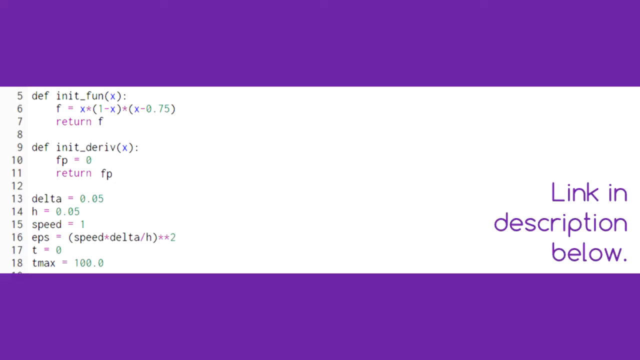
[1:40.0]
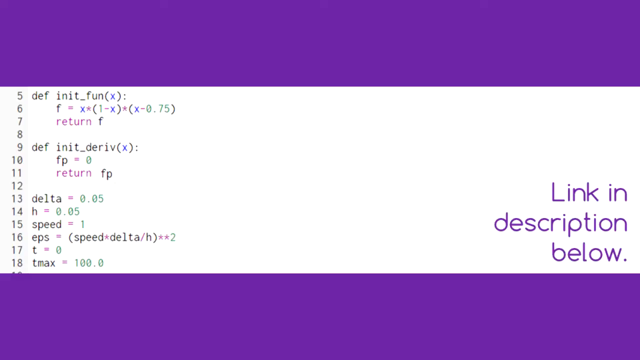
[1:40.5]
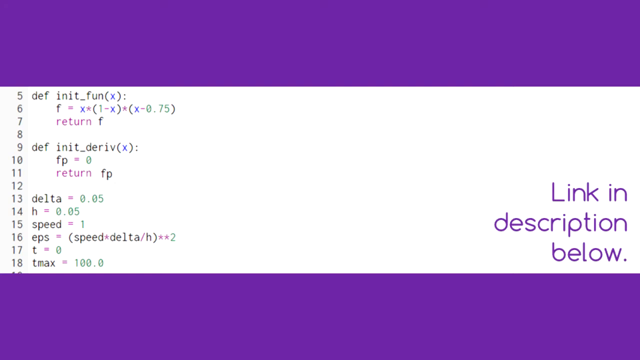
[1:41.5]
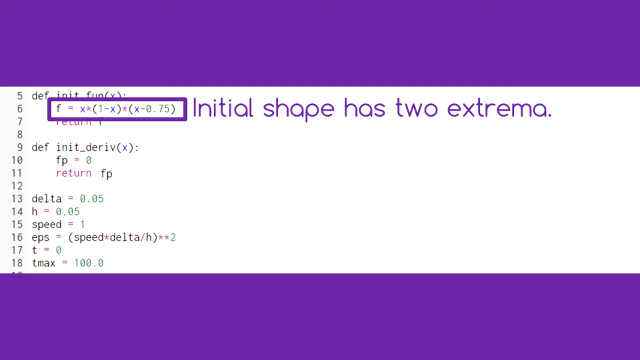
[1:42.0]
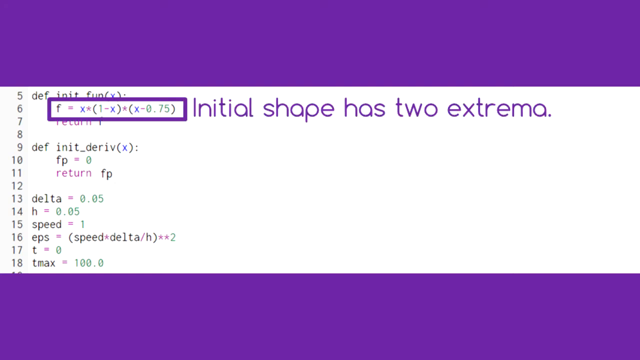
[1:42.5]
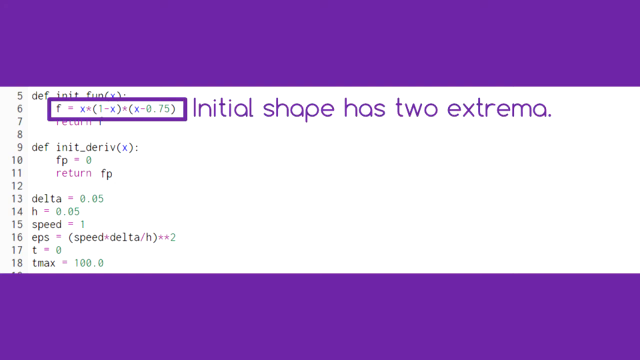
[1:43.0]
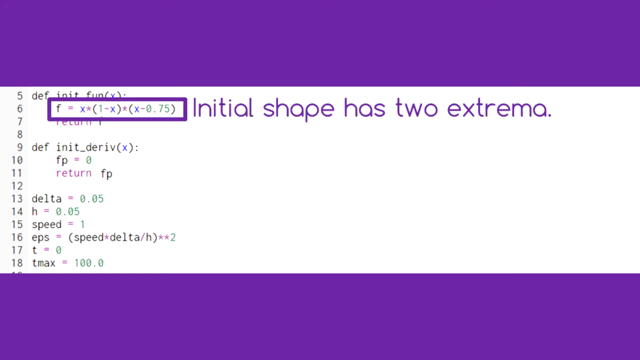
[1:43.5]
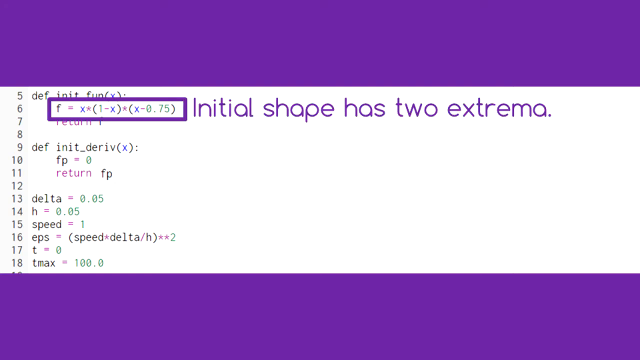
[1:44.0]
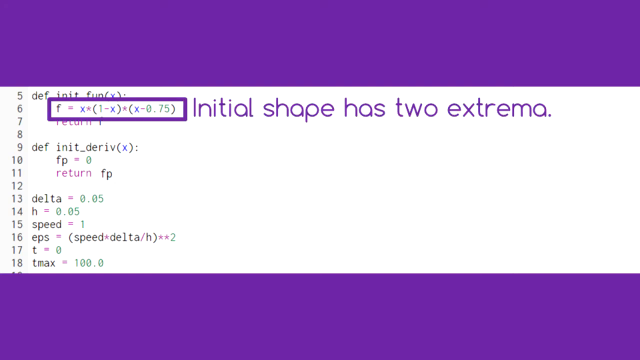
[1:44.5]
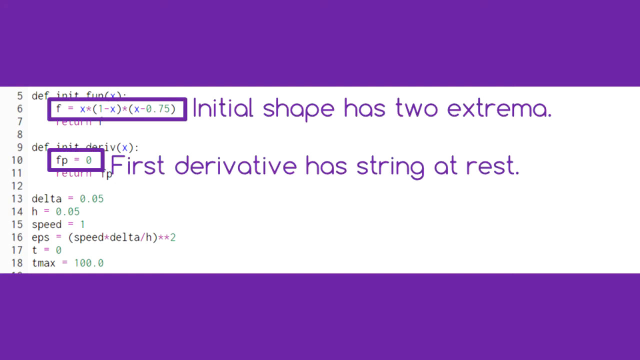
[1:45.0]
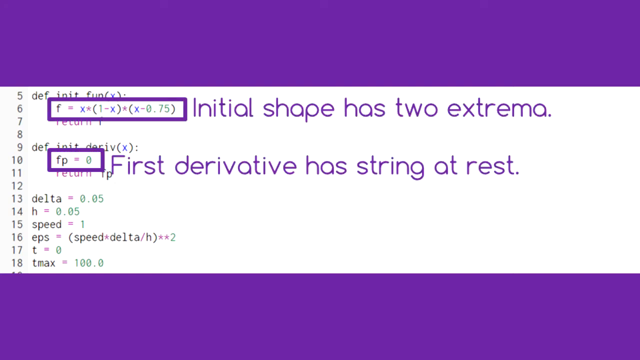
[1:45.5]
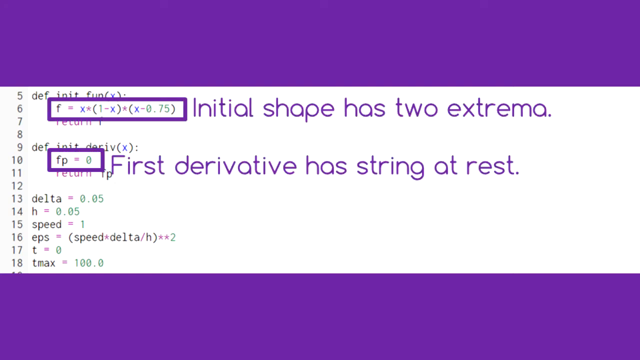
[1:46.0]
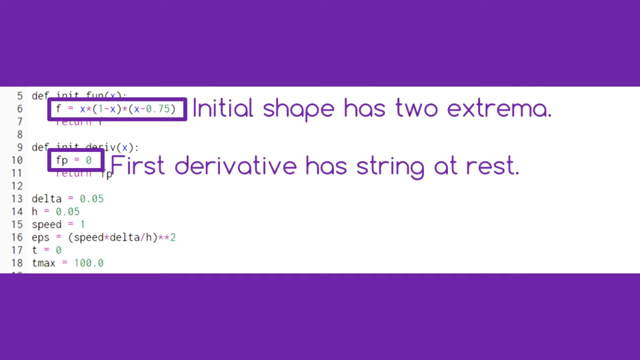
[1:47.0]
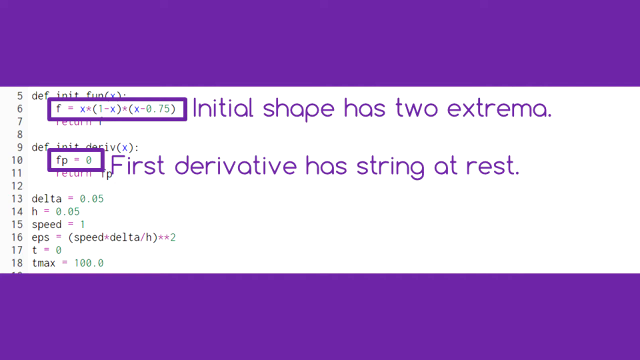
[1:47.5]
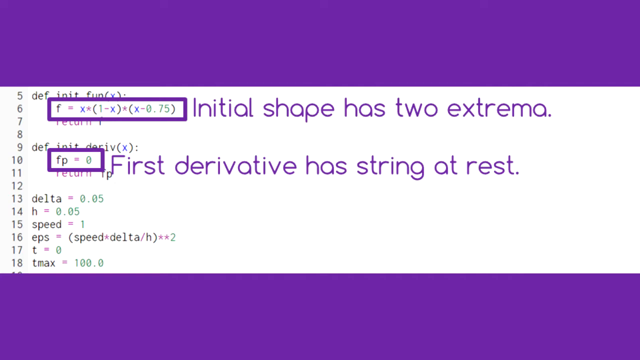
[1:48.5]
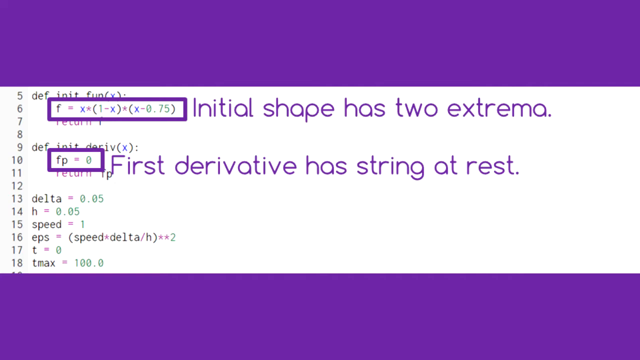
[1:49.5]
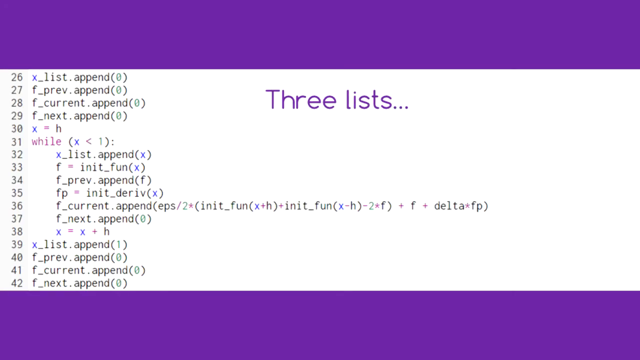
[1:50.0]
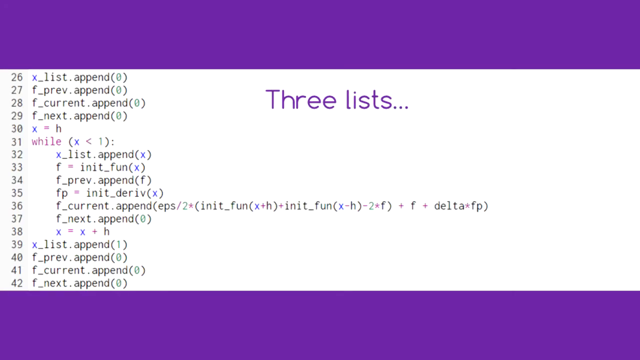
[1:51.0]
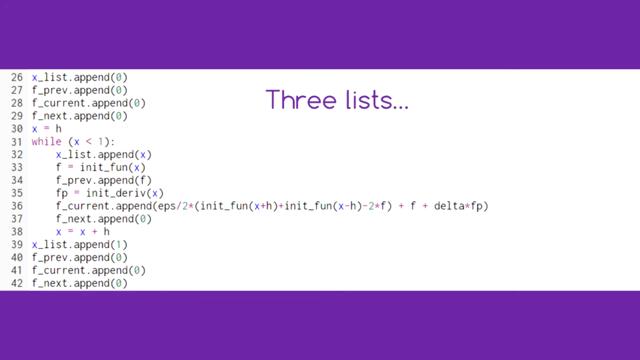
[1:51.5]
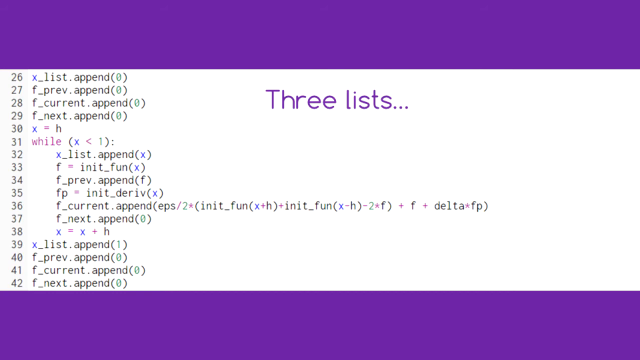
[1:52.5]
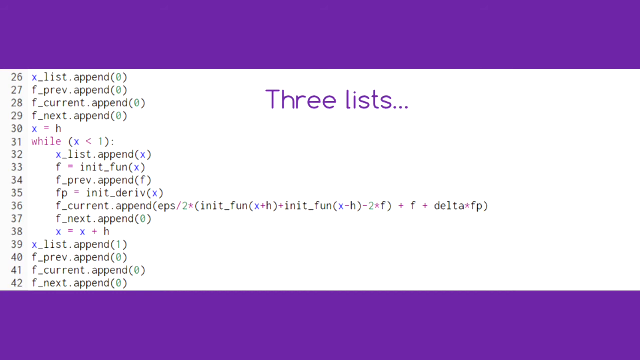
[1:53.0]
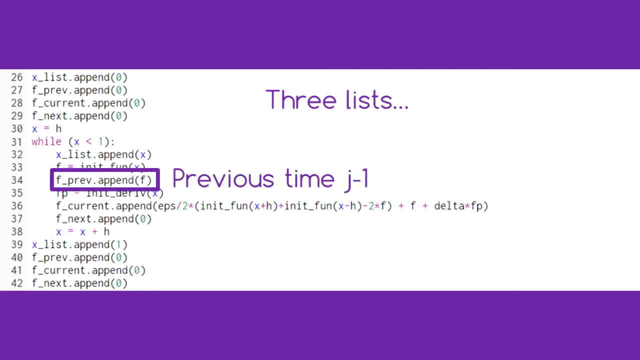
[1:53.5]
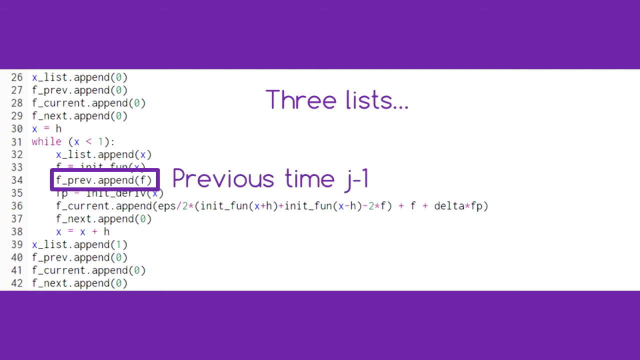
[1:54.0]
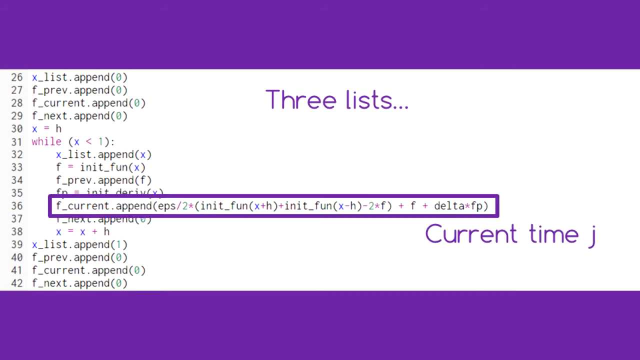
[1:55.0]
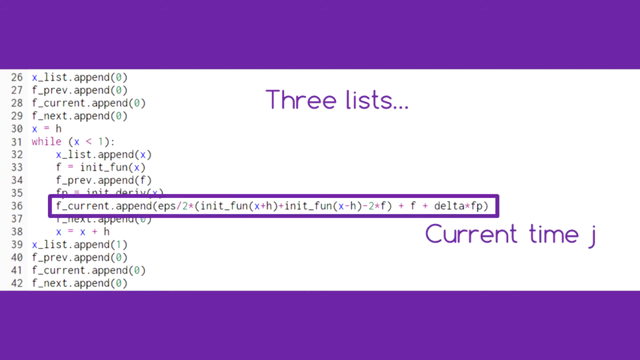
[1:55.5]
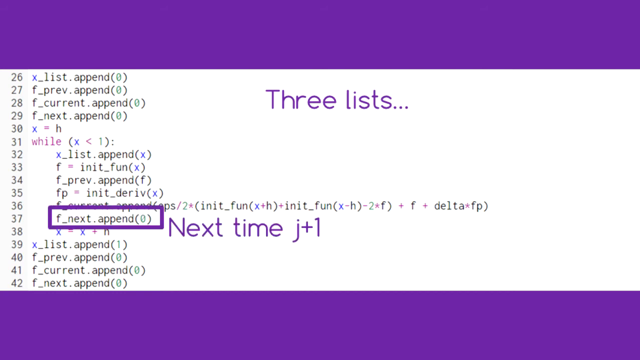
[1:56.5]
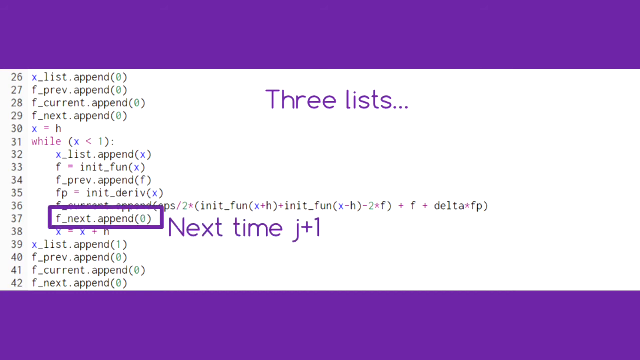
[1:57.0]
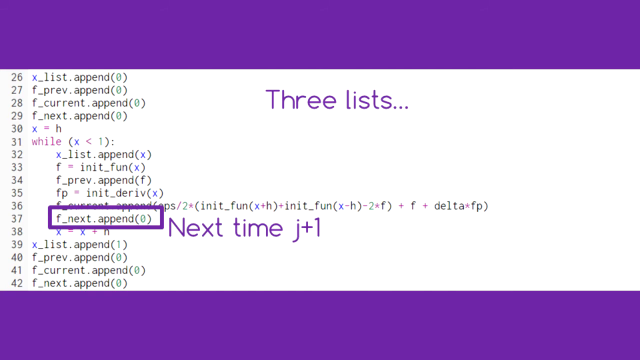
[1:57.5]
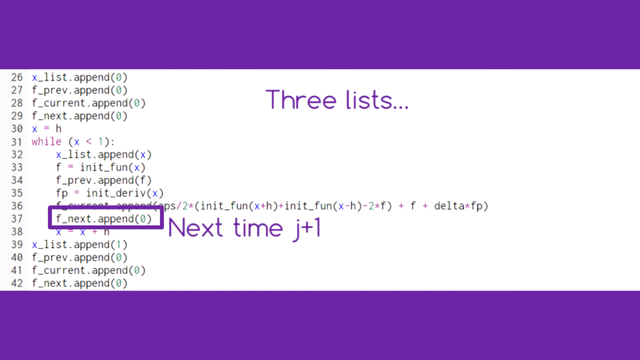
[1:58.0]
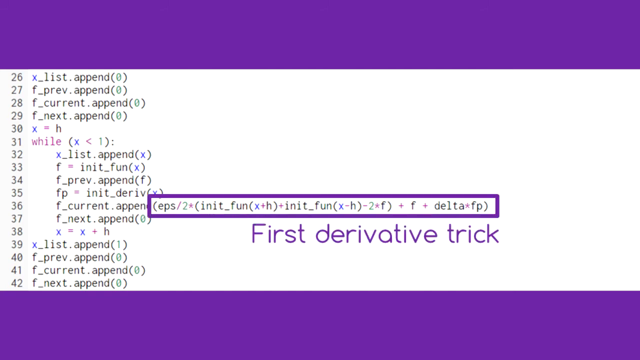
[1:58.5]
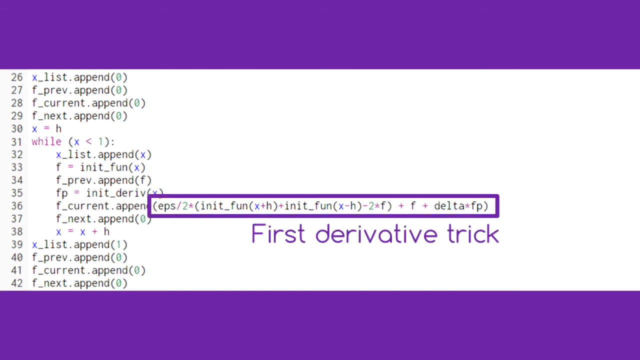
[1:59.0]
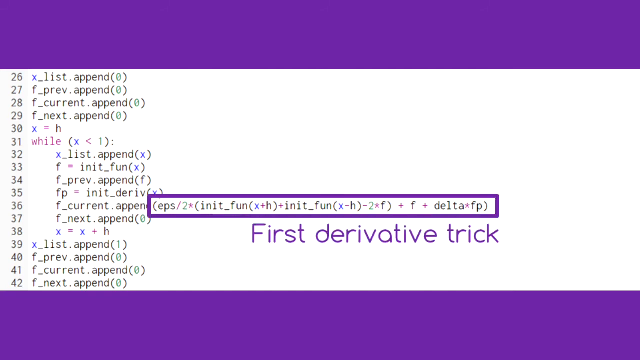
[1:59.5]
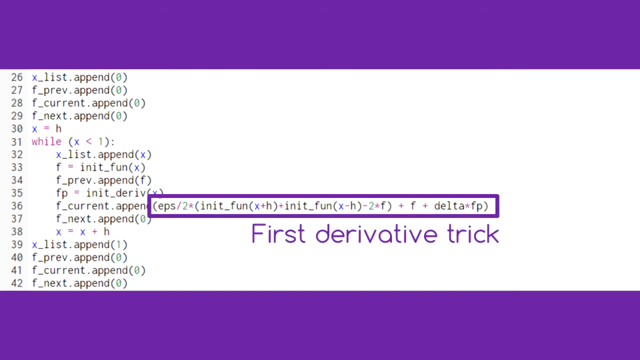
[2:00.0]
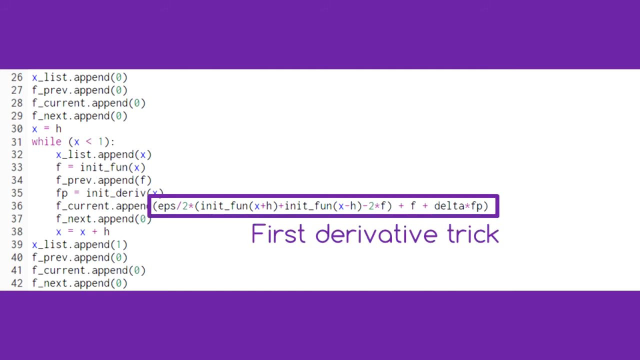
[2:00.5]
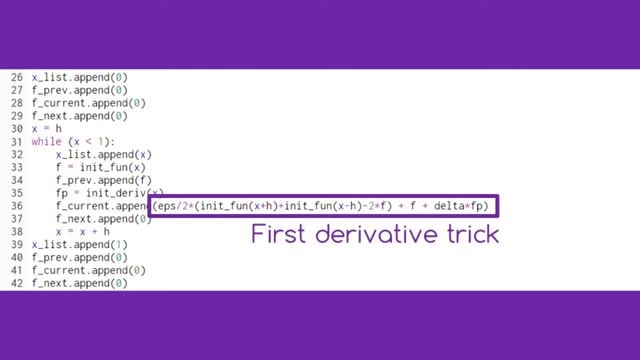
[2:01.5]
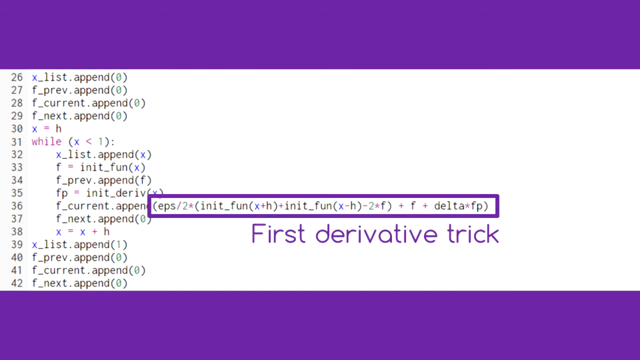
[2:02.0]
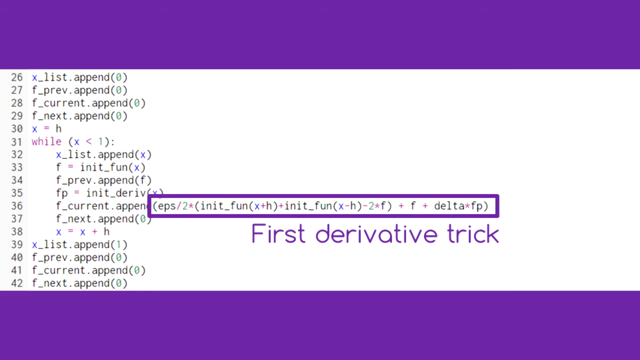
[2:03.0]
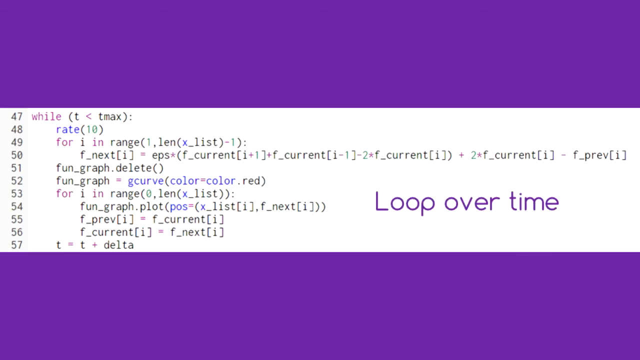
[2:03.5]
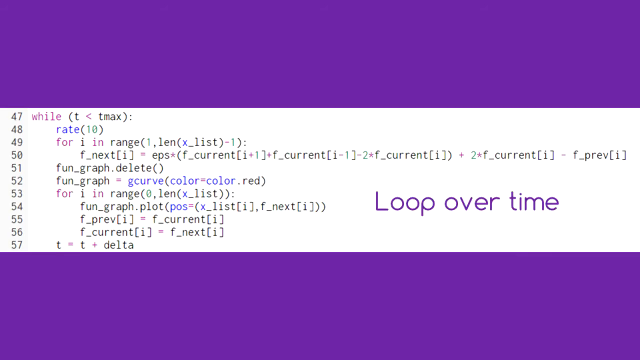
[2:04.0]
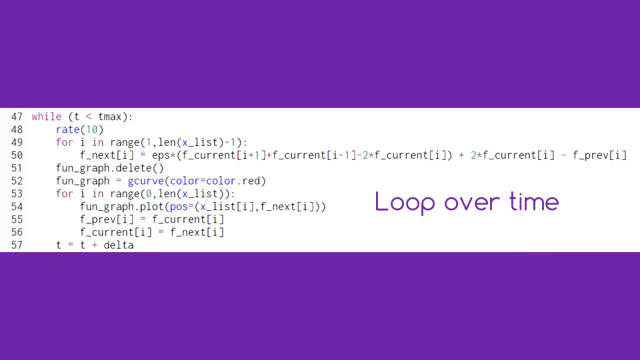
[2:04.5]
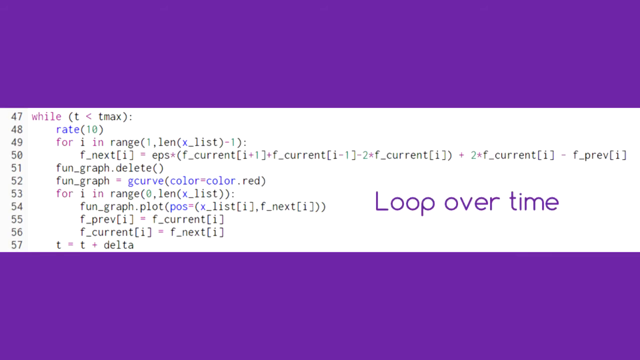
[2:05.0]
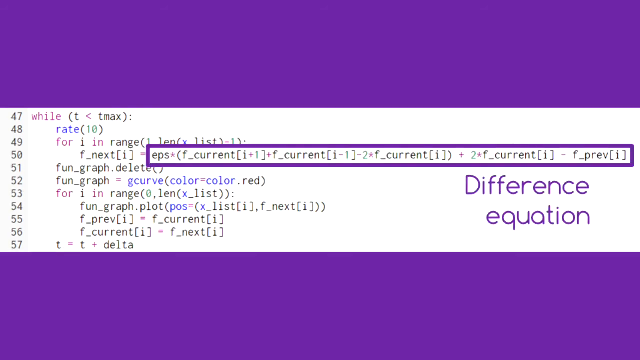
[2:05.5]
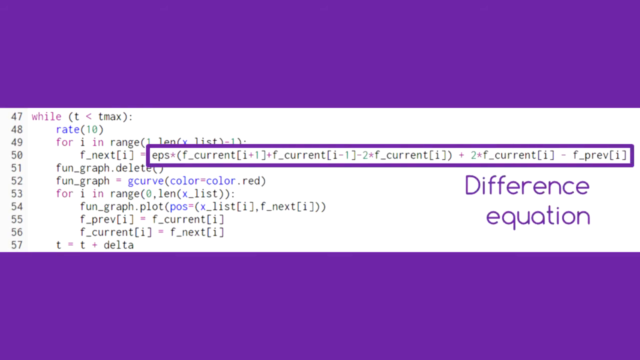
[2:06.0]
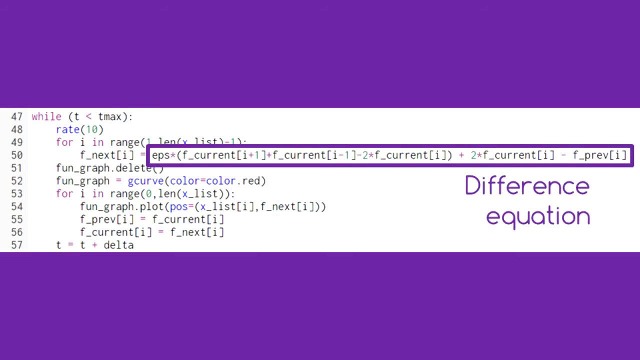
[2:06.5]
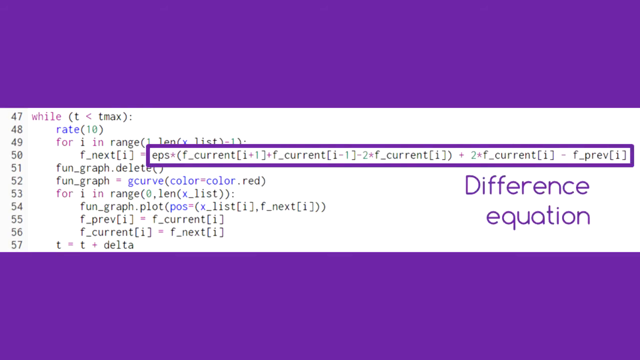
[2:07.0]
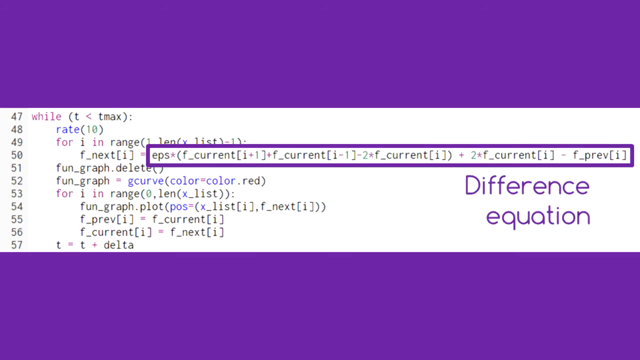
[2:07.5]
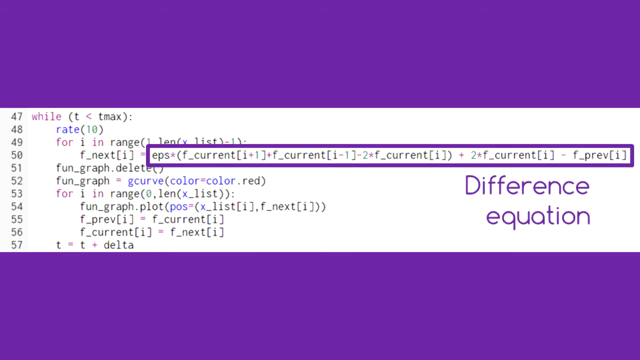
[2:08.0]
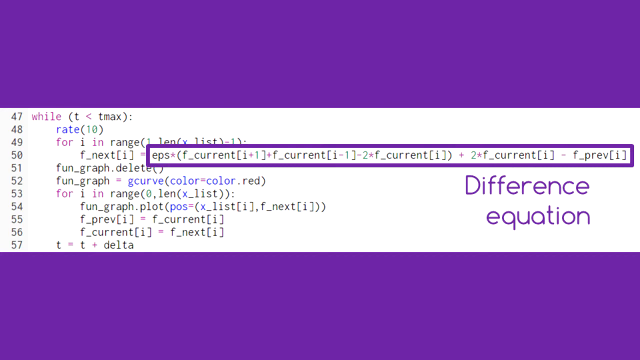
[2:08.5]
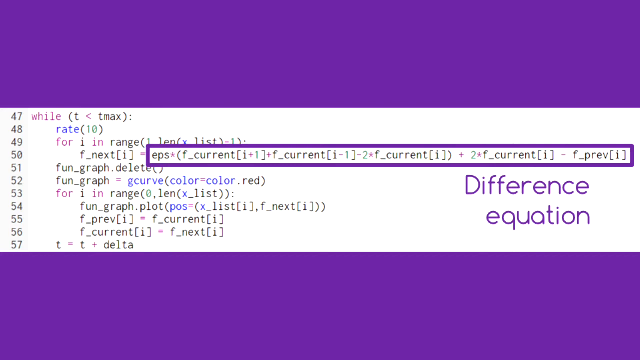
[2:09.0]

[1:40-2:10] The video shows the initial shape, with the previous time as J-1 and the current time as J. A difference equation is shown, followed by the times before, previously and after, loop times, and the end result of the equation, along with the steps leading to it.